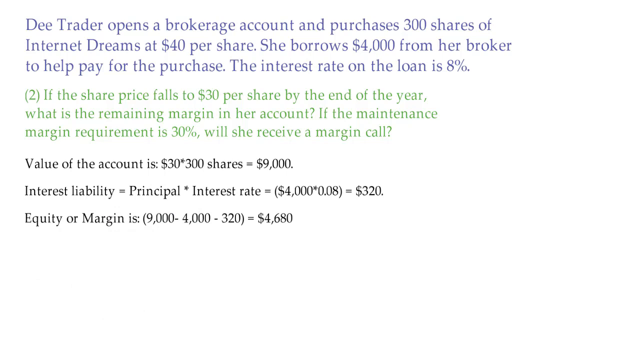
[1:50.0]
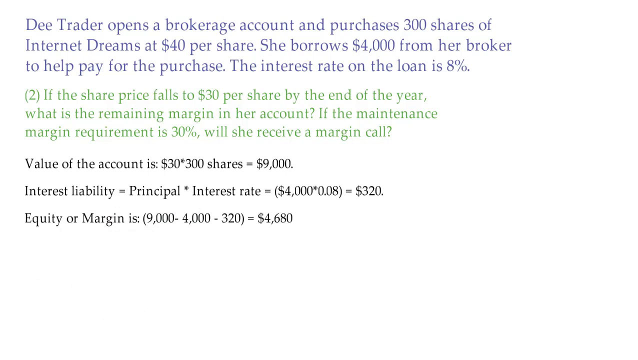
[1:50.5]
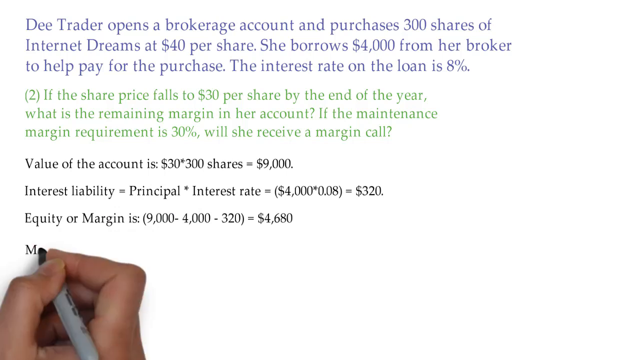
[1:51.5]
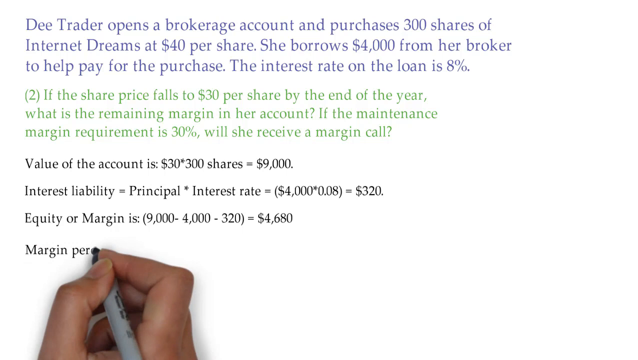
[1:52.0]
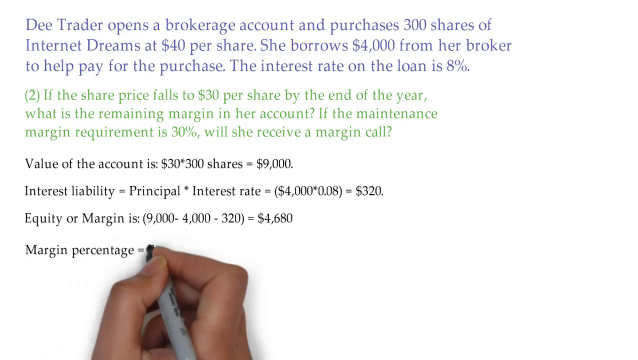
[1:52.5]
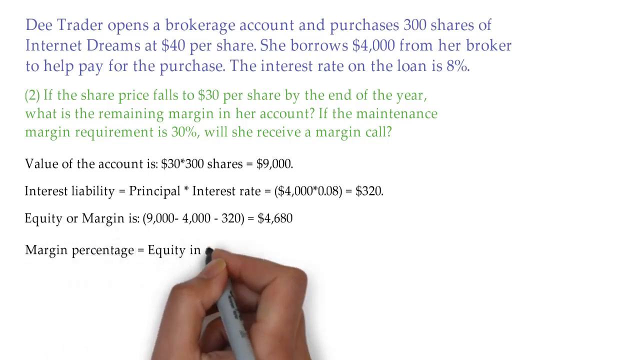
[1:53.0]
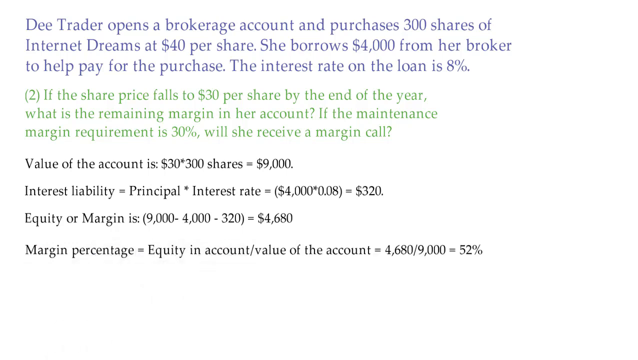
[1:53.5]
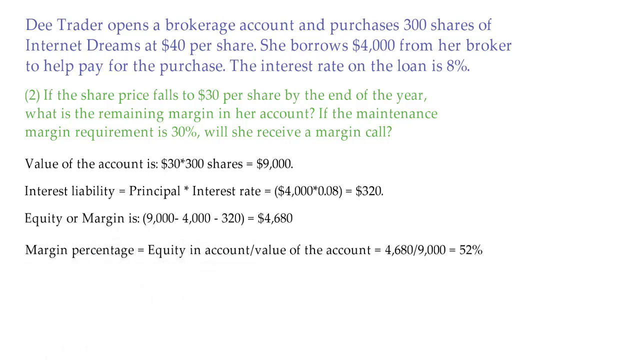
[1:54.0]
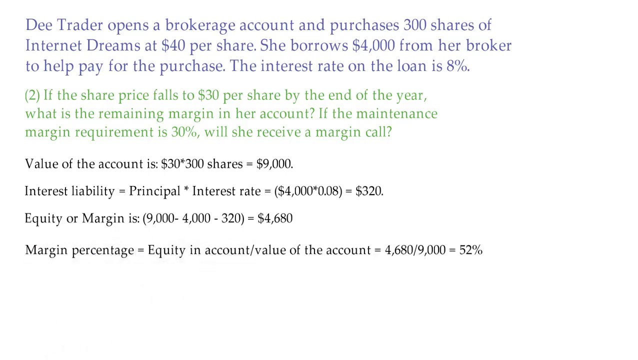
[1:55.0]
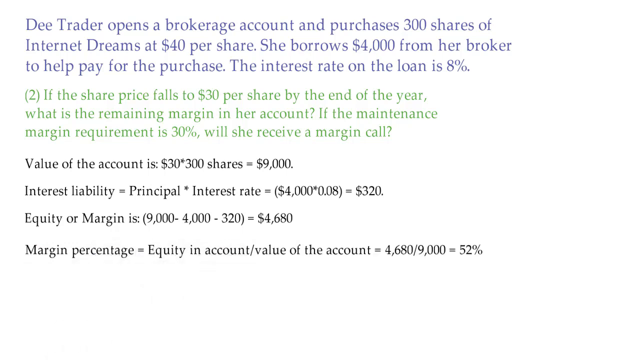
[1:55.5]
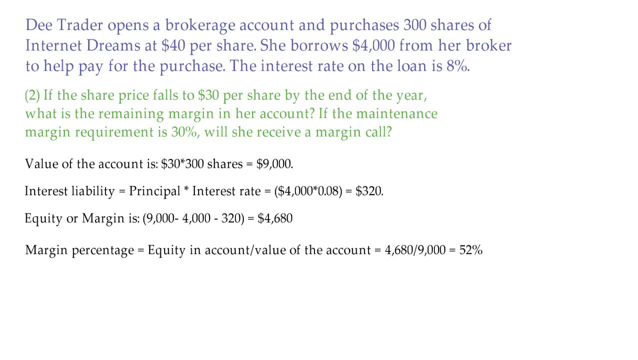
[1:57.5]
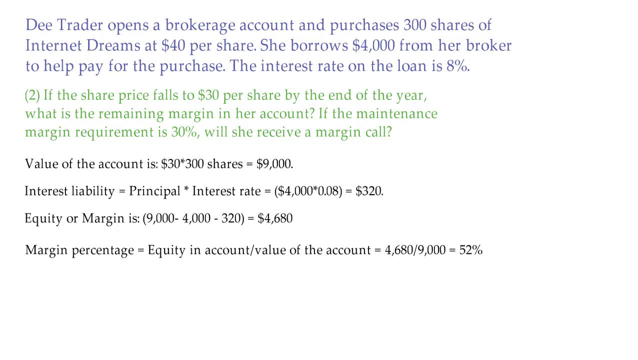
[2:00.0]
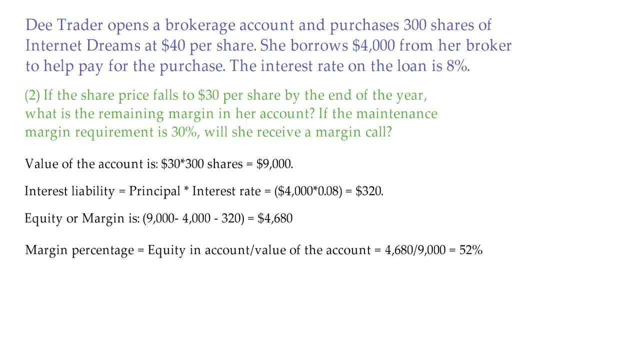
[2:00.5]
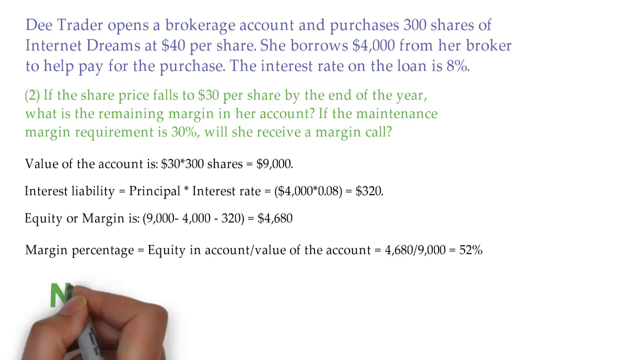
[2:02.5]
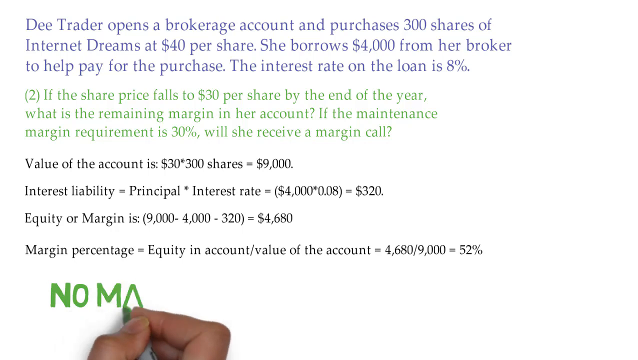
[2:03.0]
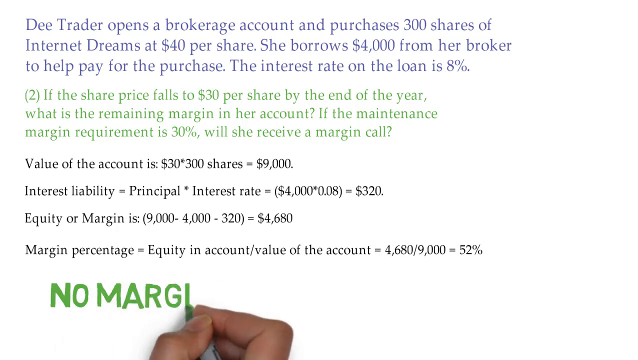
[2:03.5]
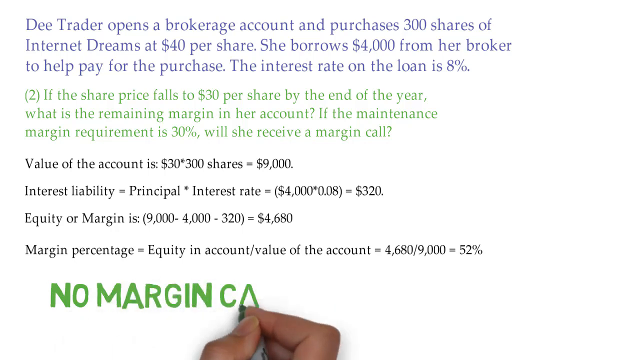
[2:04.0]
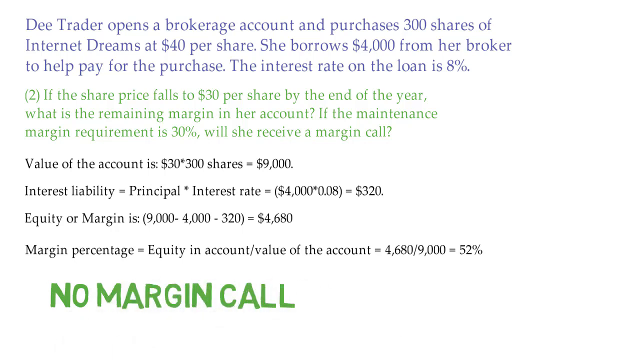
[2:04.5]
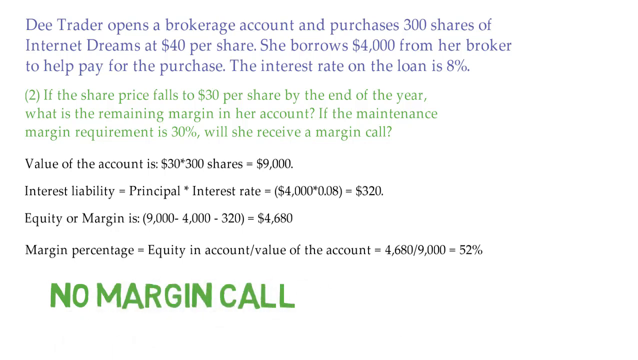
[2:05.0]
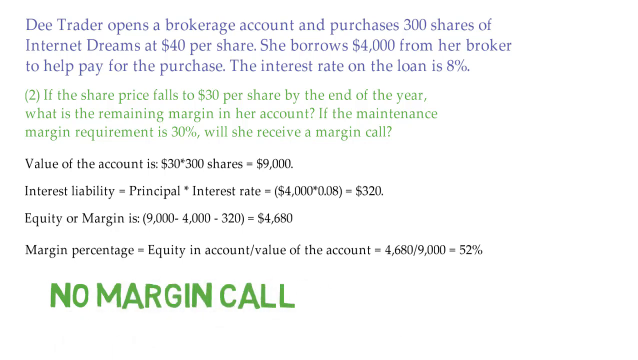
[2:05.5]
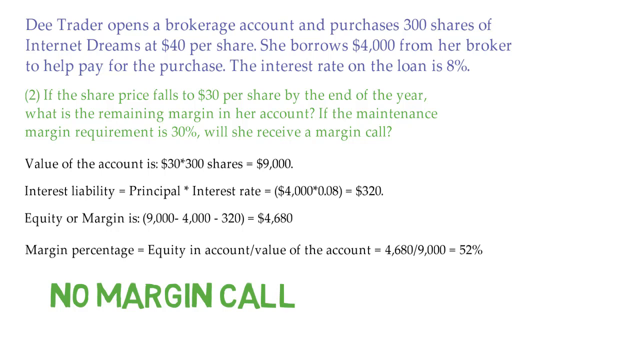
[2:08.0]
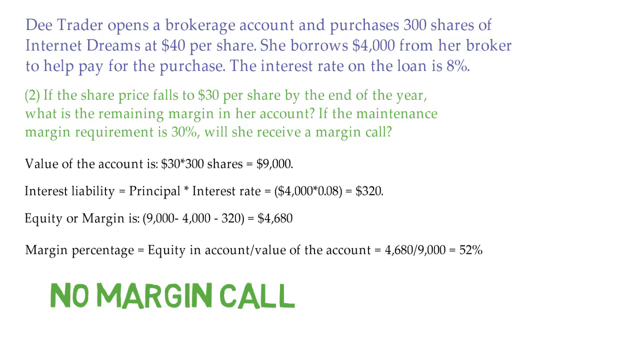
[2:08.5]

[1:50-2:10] The plain white screen still displays the word problem at the top in blue. Black text appears: "margin percentage= equity in account/value of the account = 4,680/9,000 =52 %." The hand holding the Sharpie comes up again from the bottom of the screen, and the writer uses their right hand to quickly write the phrase "NO MARGIN CALL" in bold, capital, green letters, bolder than any other line on the screen. The right hand holding the Sharpie then exits from the bottom of the screen. The screen continues to display the word problem and the steps taken to determine the margin percentage.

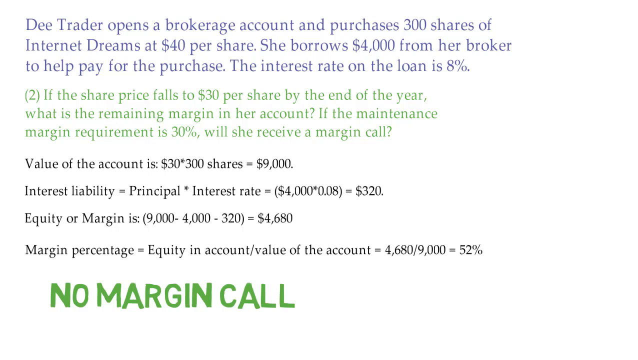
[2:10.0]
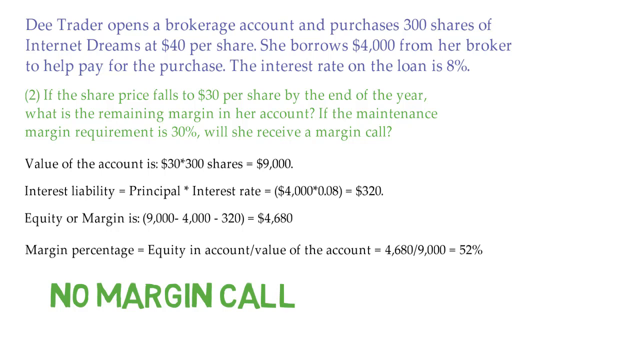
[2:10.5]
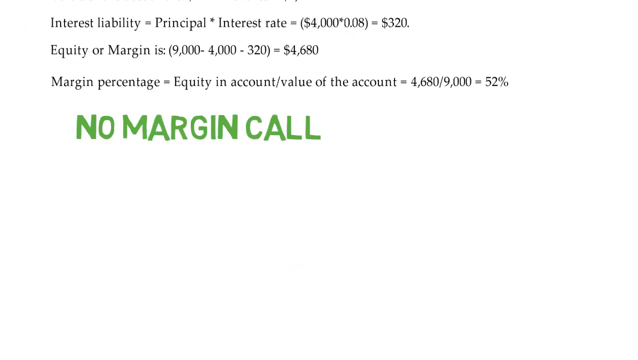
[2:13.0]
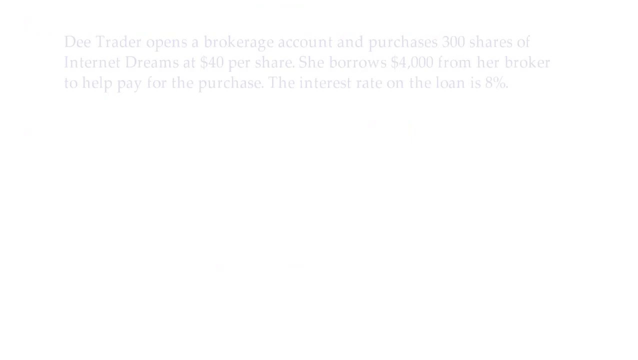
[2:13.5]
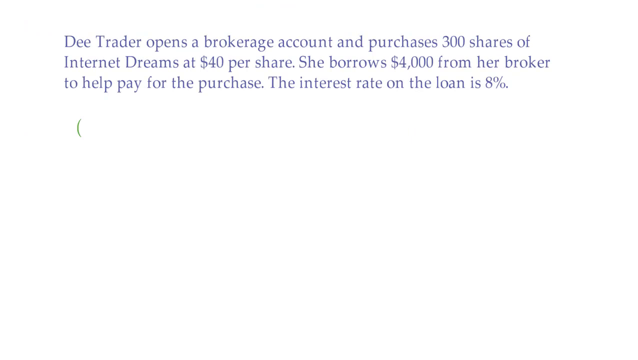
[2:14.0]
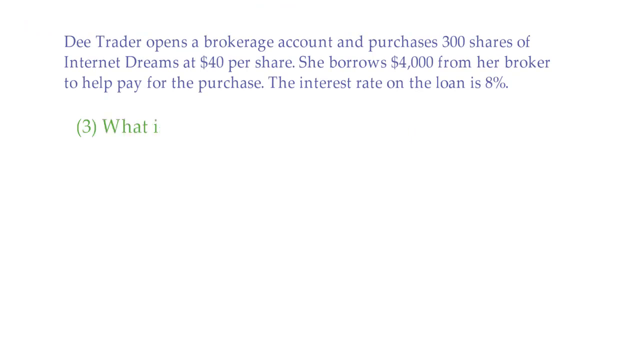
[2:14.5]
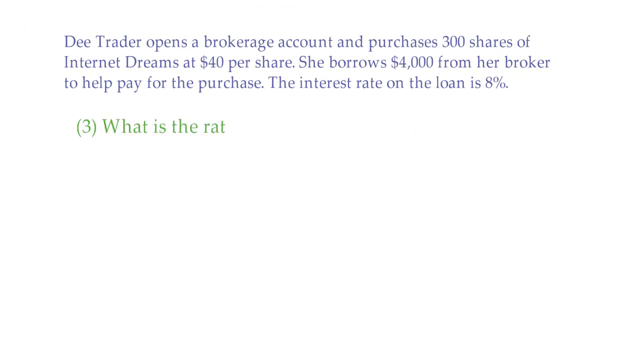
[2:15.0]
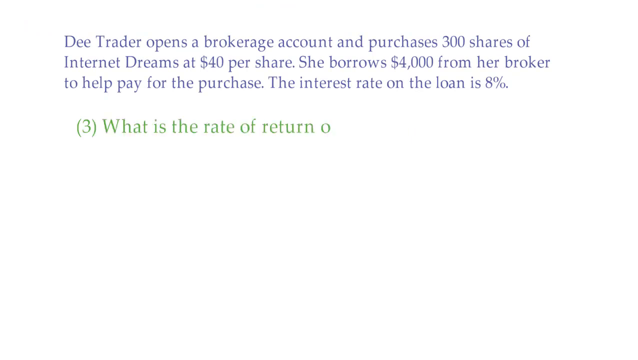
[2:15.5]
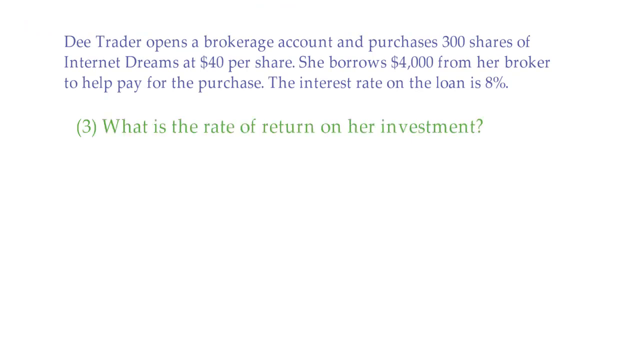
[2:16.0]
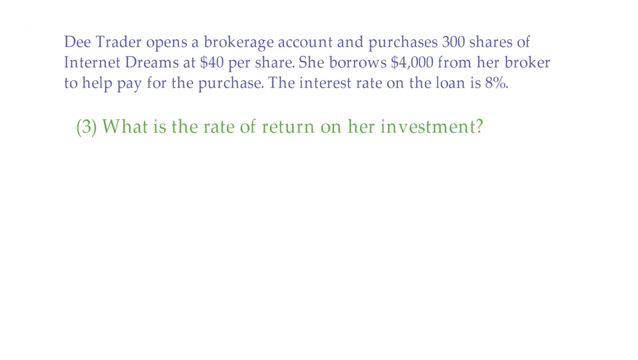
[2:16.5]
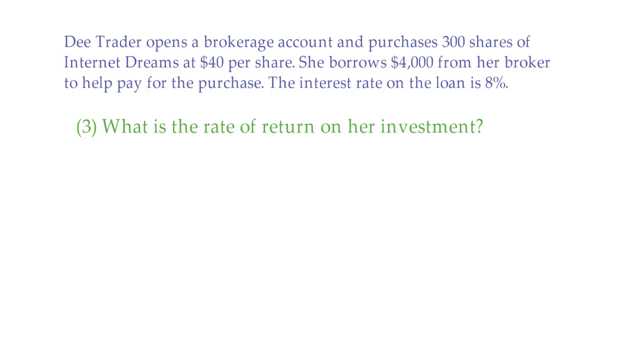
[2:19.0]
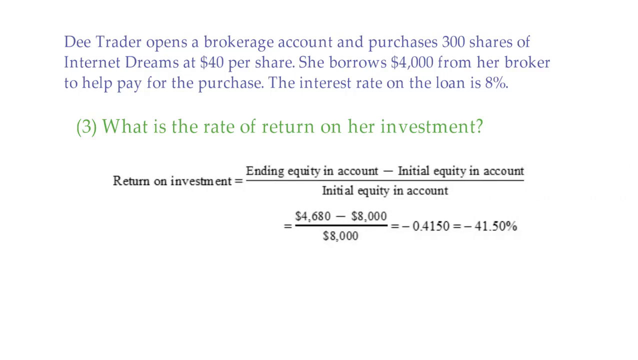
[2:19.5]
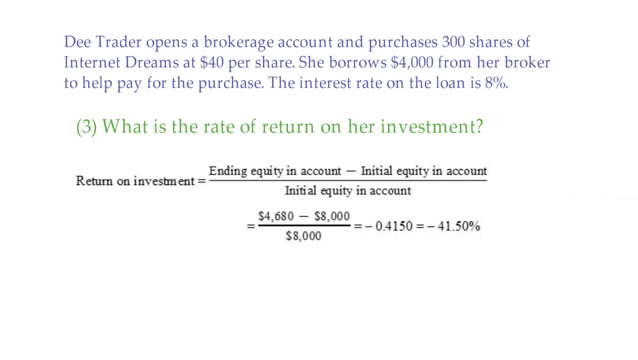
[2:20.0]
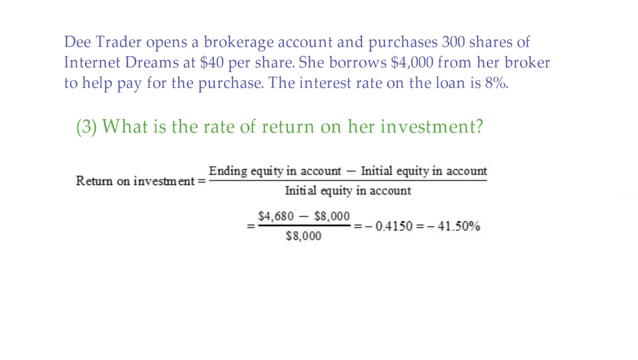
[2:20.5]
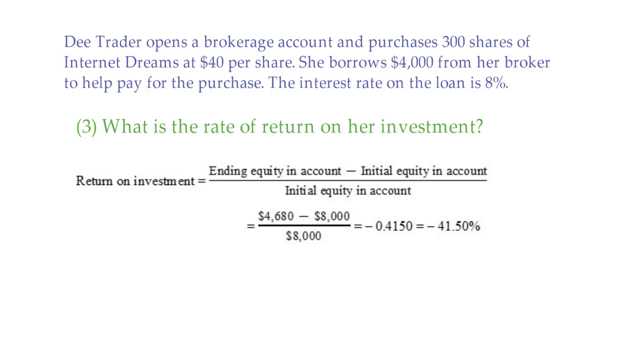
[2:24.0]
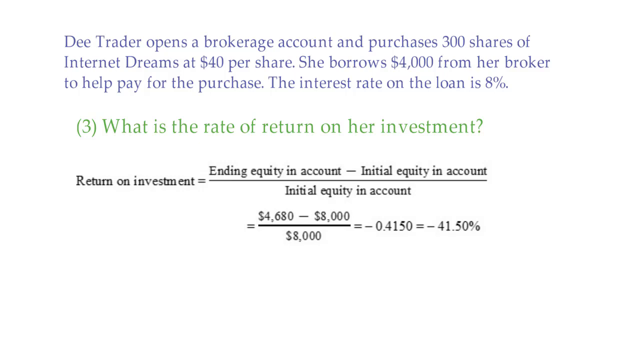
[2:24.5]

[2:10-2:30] The screen shows the phrase "NO MARGIN CALL" in big, bold, green letters at the bottom. After a moment, a new screen appears with the original word problem still at the top in blue. Step three appears in green: "(3) What is the rate of return on her investment?" An in-depth equation follows in black, showing that the return on the investment equals the ending equity in the account minus the initial equity in the account, divided by the initial equity in the account. The steps, clearly labeled on the screen, arrive at -41.5%.